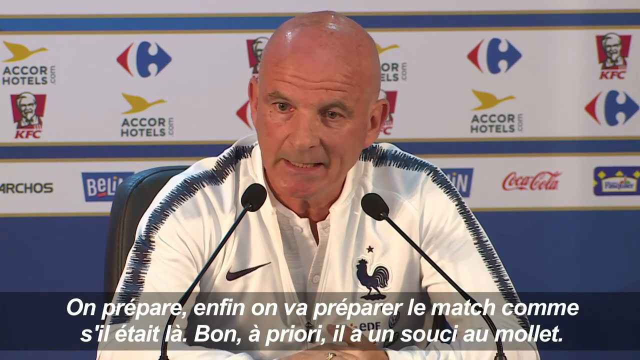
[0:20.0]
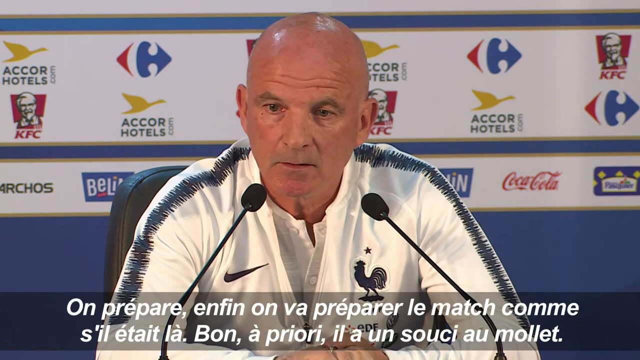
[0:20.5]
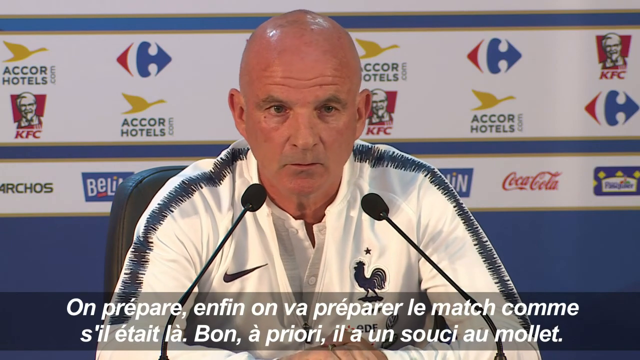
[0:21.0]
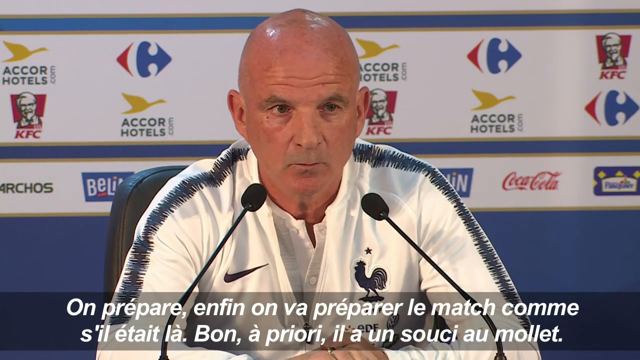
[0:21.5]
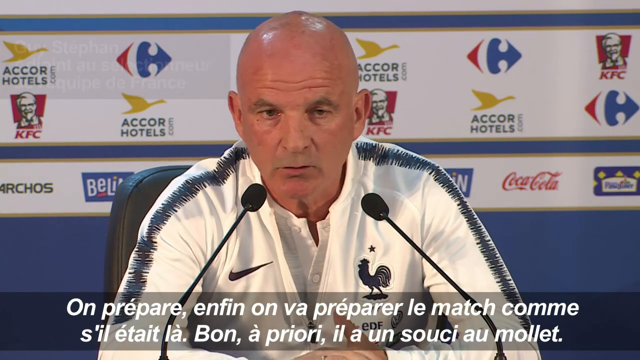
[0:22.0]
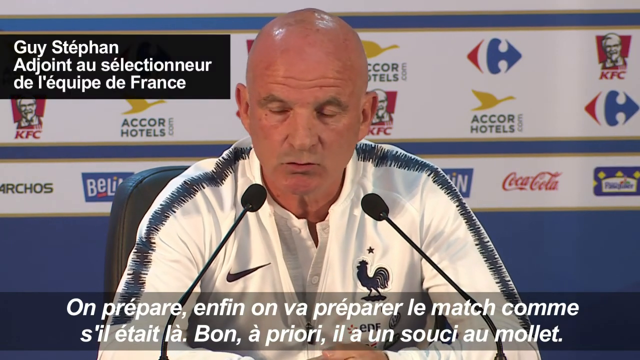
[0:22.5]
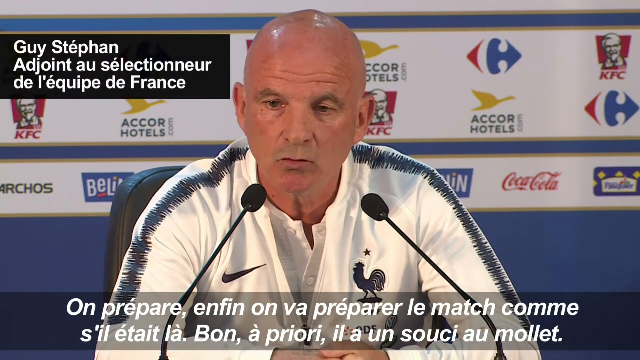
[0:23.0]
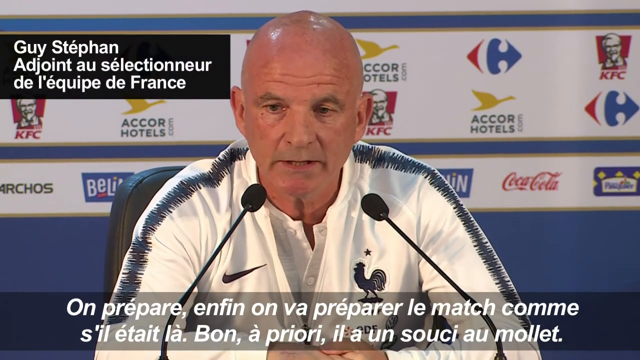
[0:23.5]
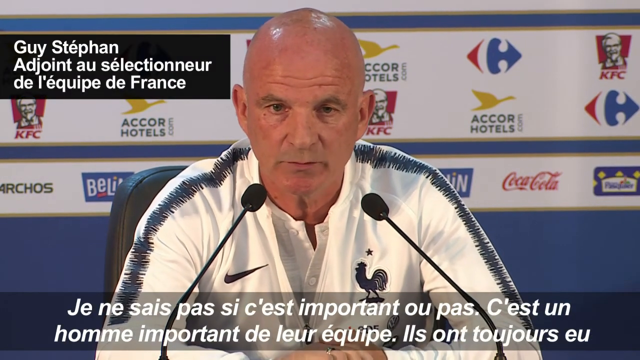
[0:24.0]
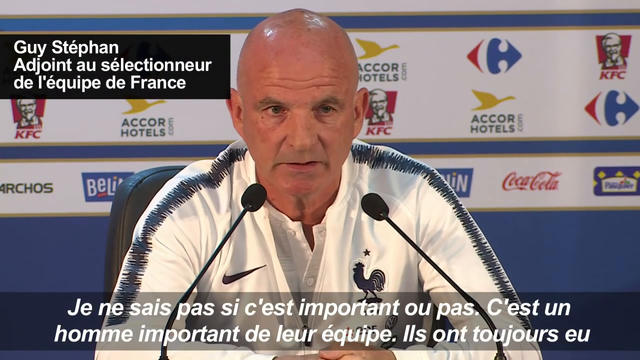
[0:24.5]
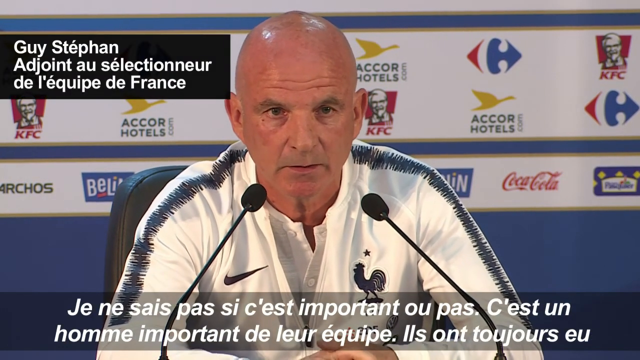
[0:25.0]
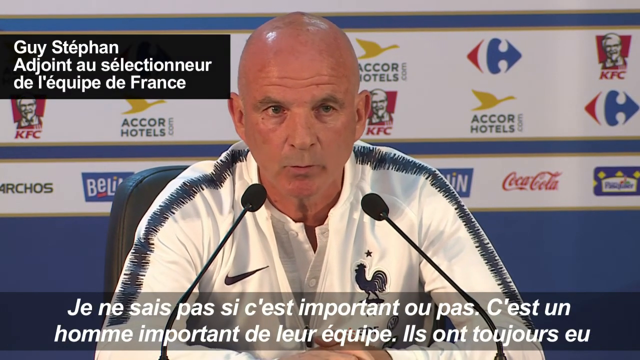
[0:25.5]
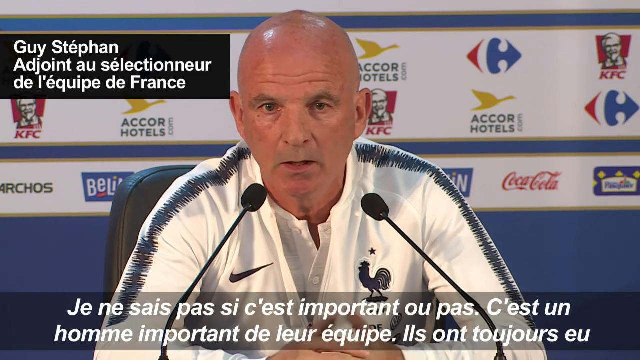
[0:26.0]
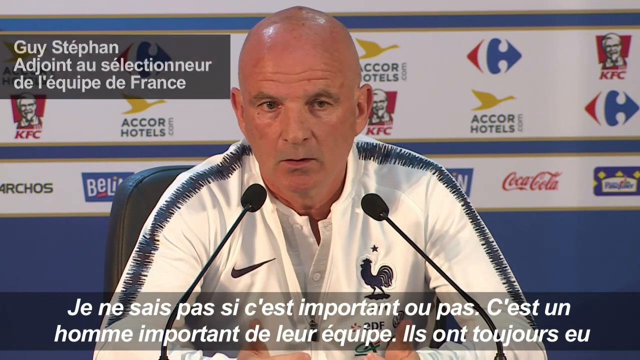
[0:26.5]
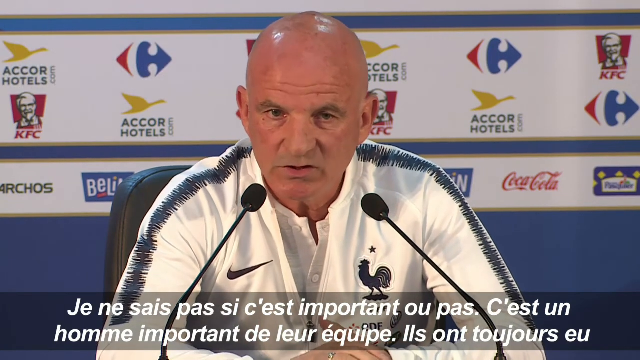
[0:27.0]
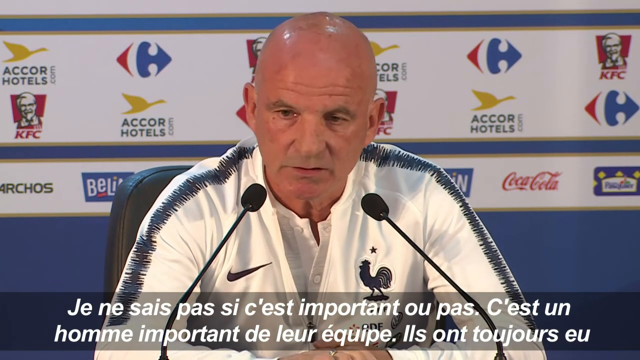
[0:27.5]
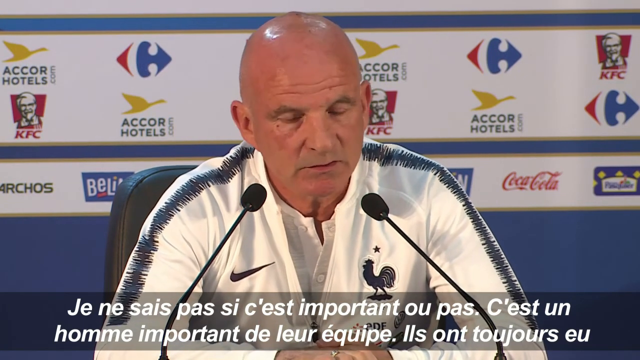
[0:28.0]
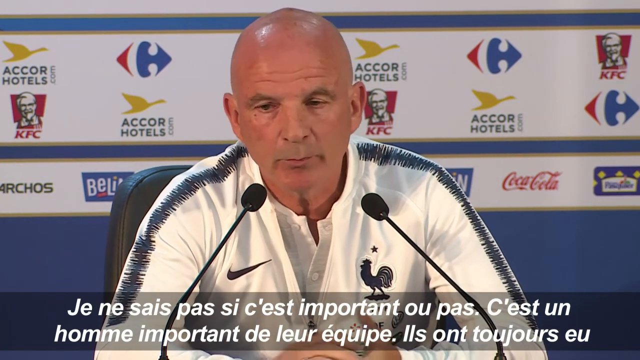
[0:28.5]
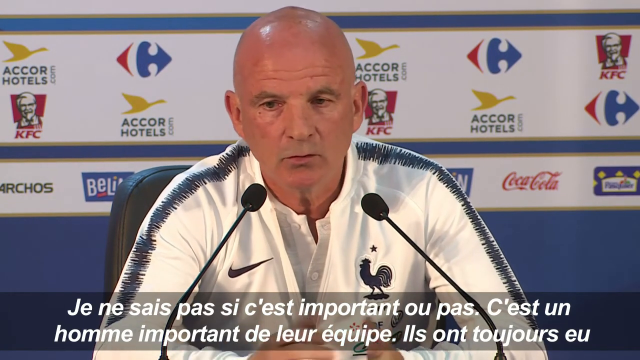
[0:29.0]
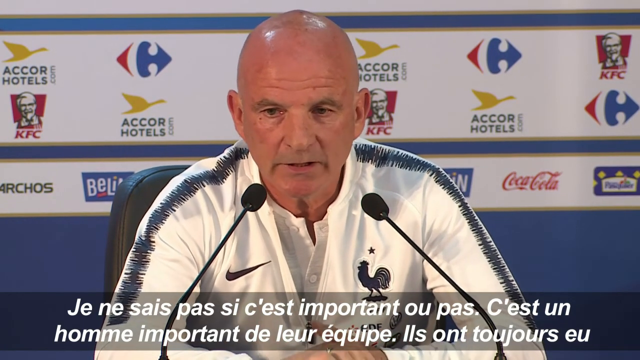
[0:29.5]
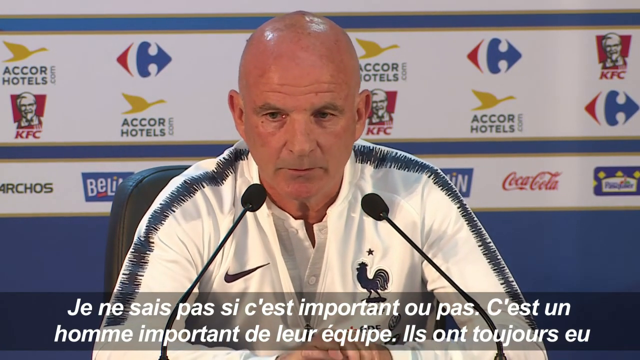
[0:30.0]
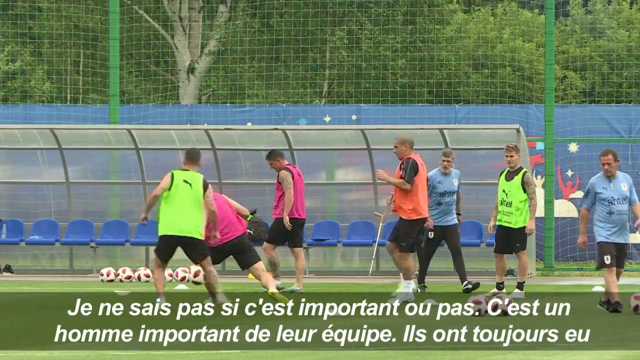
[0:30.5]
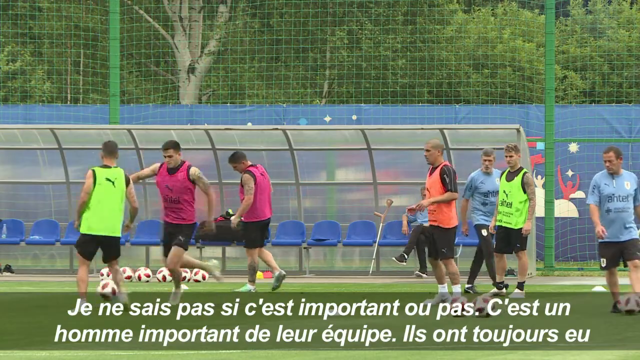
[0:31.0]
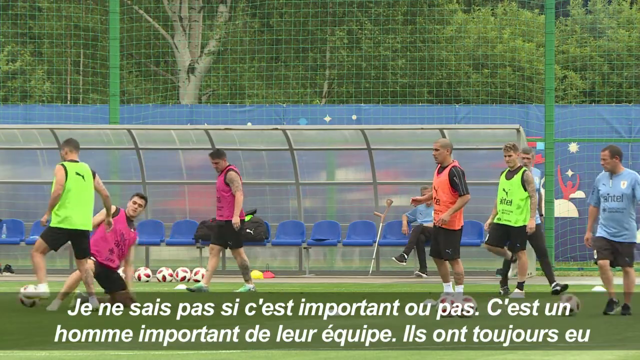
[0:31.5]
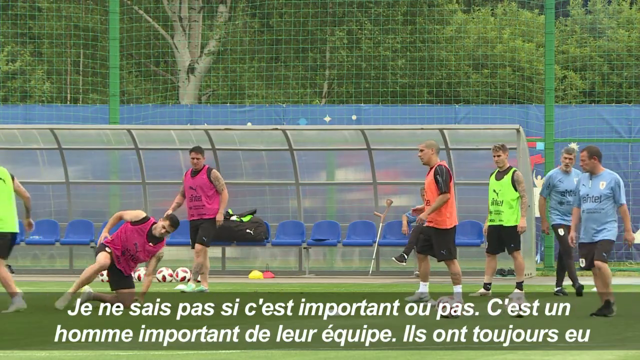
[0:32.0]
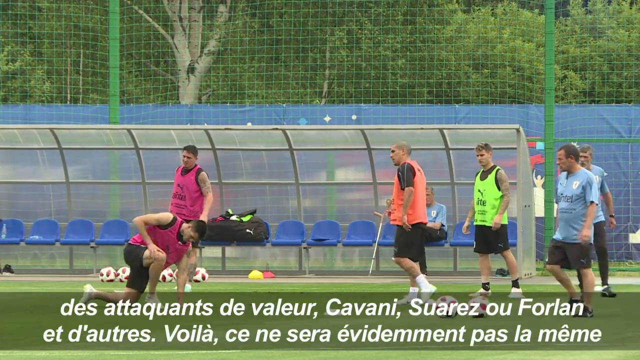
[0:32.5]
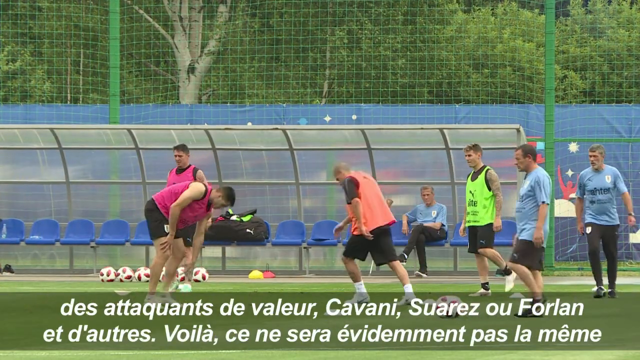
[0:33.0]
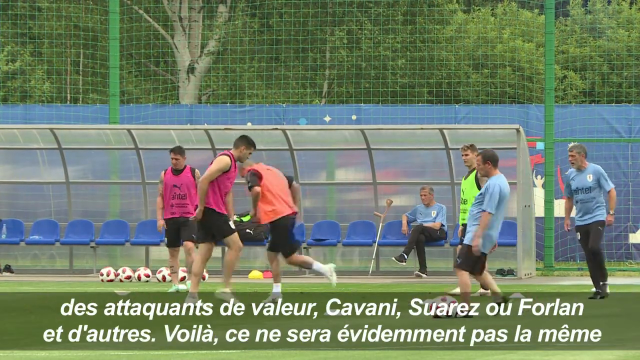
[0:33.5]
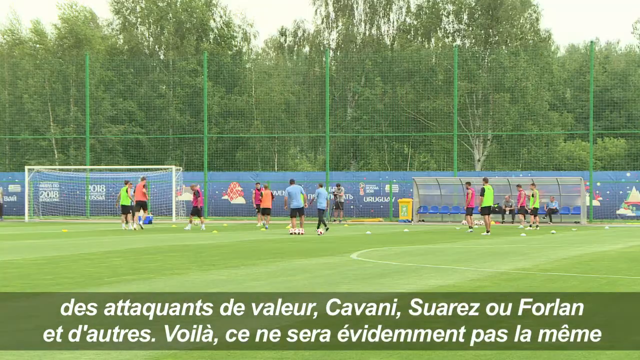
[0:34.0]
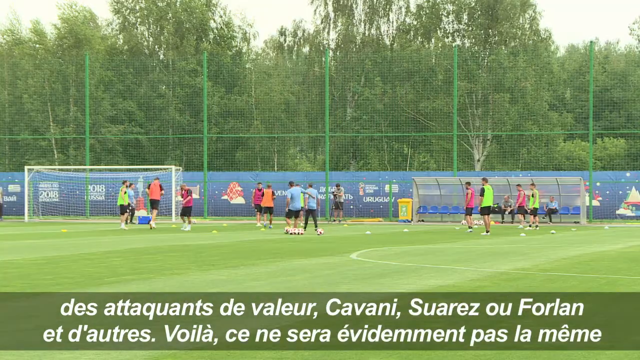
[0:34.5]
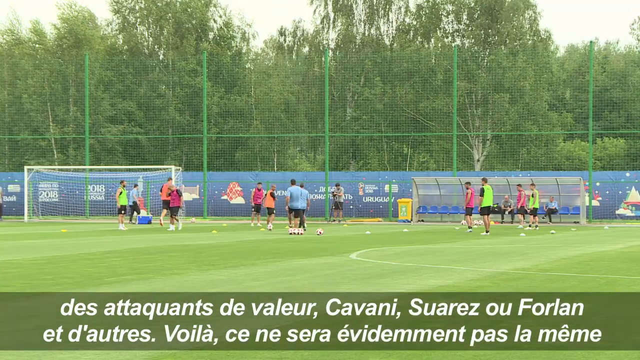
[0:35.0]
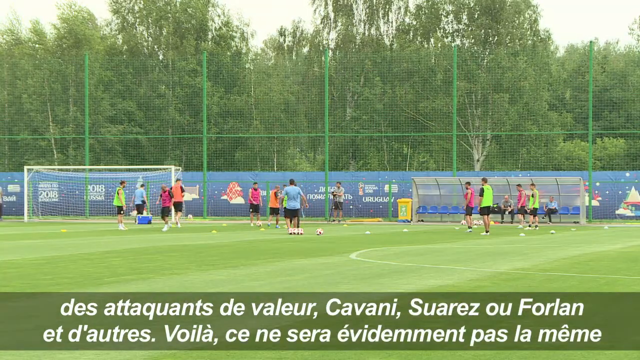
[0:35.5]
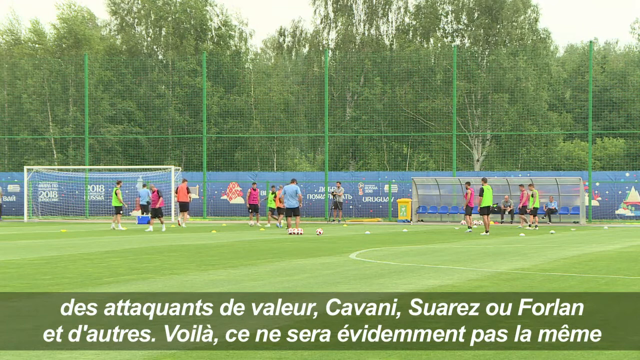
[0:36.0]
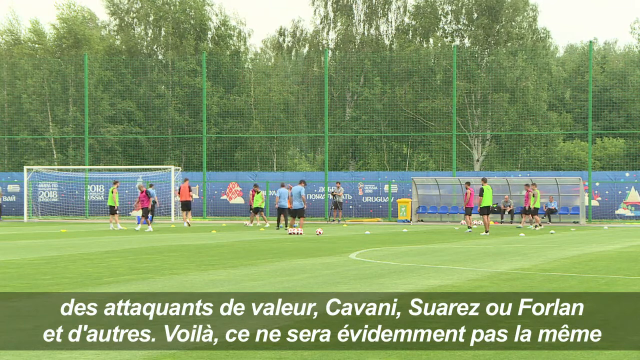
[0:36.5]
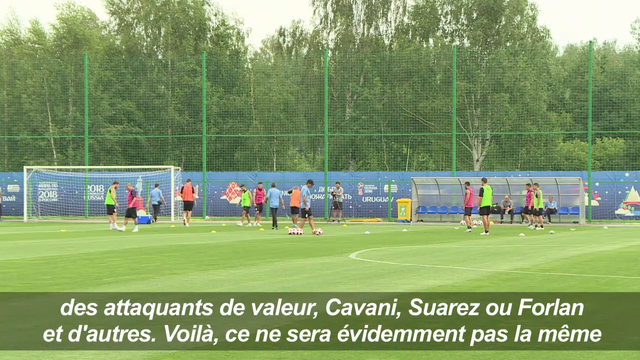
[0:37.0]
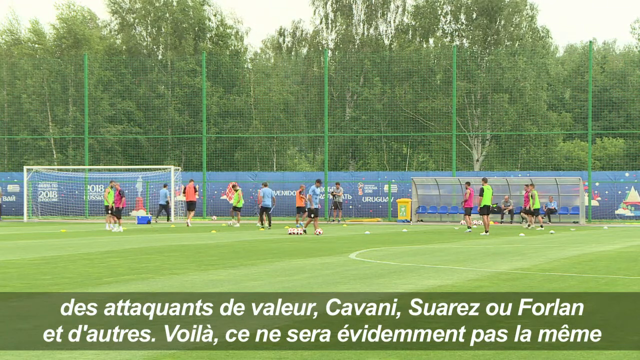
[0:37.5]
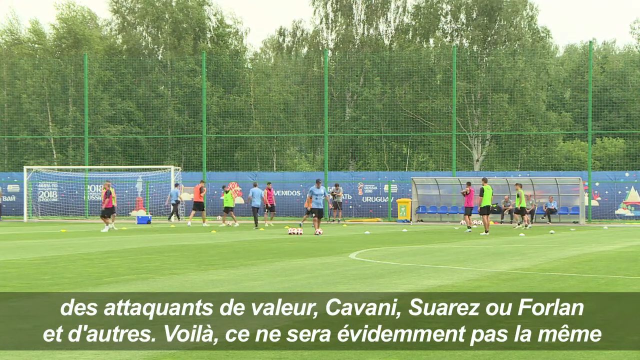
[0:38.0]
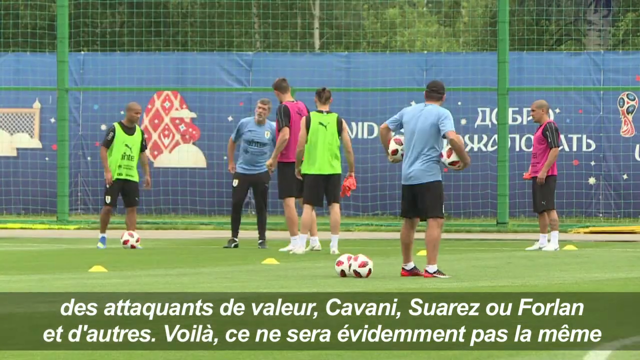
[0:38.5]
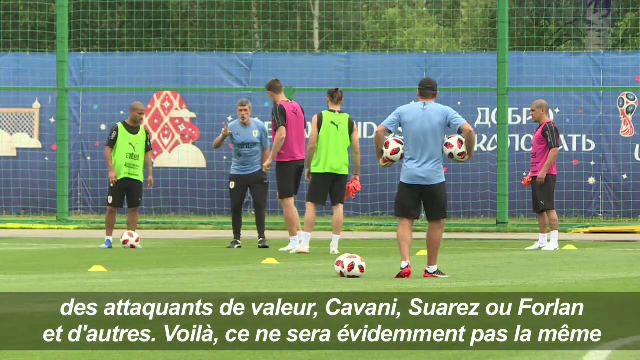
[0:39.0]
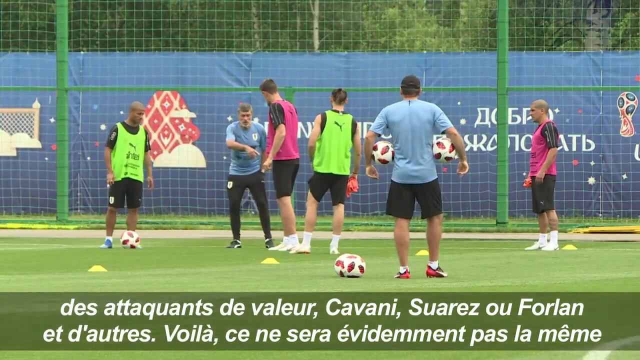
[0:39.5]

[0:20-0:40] The close-up continues on the bald man talking into the two microphones, which rise up from the table to sit just under his jaw. A graphic appears in the top left of the screen: a black horizontal rectangle with white writing that says 'Guy Stephan, Adjoint au selectionneur de l'equipe de France'. As he speaks, white subtitles overlaid on a darkened horizontal strip along the bottom of the screen keep updating, appearing to translate what he is saying. The video cuts to a distant shot of a football training pitch, at the same height as the players, who are off in the distance wearing black shorts and neon-coloured tabards. Behind them are netting and green posts, plus a canopied seating area where an older man is sitting watching from a row of blue seats. The view pulls to a wide shot showing the pitch with the goal off to the left. A cut back to a tighter shot of the training shows a man in a blue shirt standing with his back to the camera, holding footballs under each arm, with footballs on the ground.